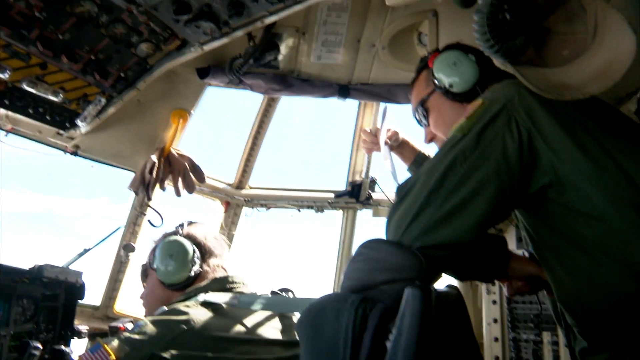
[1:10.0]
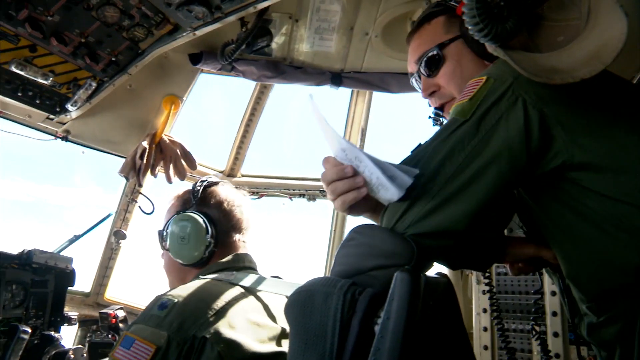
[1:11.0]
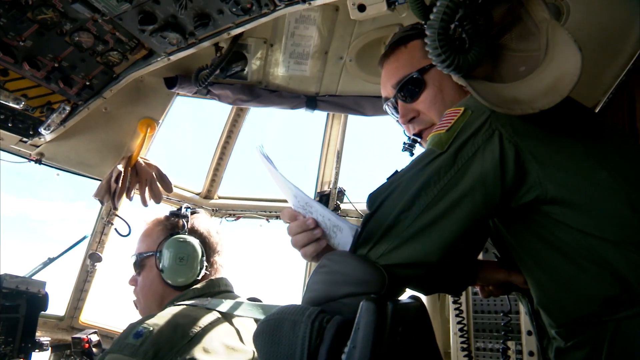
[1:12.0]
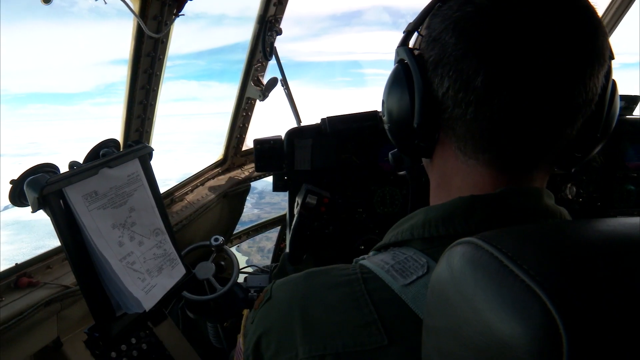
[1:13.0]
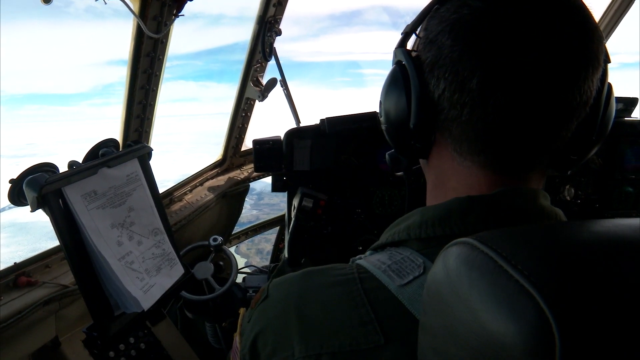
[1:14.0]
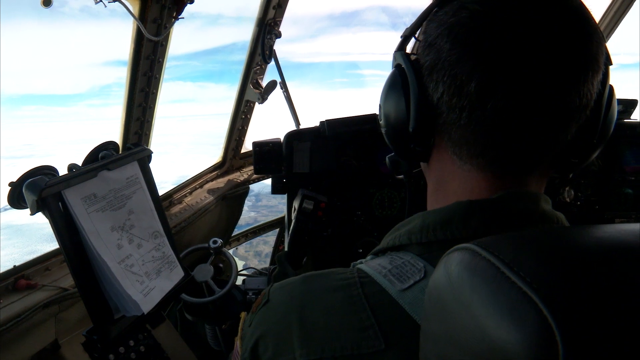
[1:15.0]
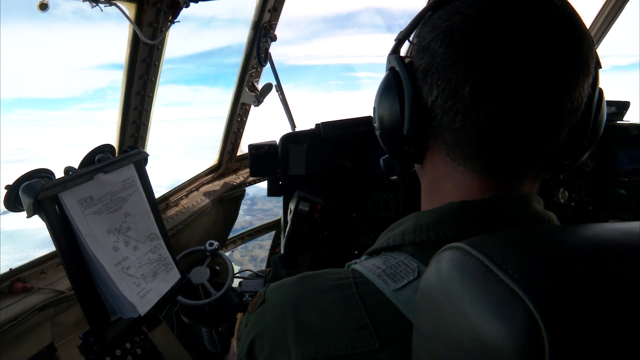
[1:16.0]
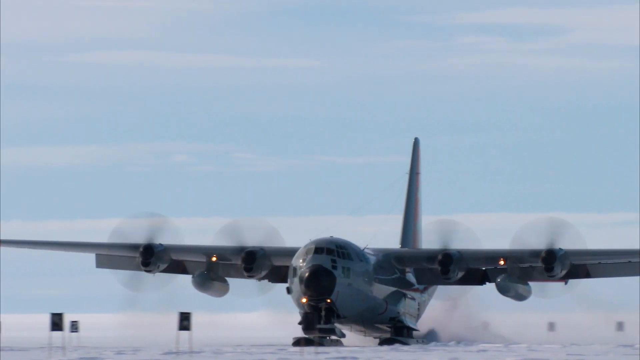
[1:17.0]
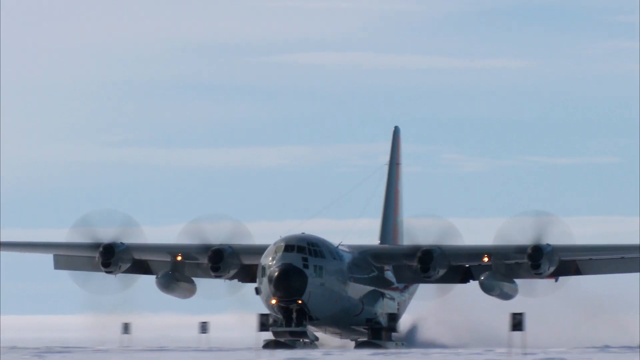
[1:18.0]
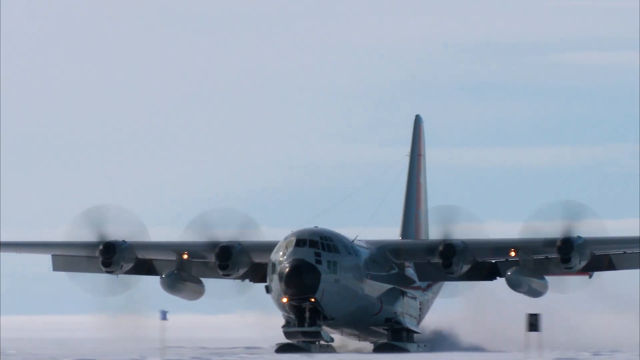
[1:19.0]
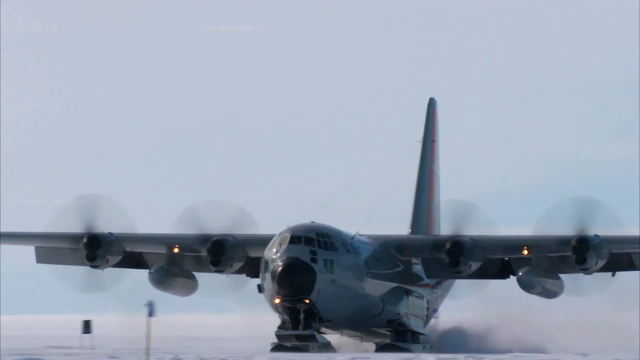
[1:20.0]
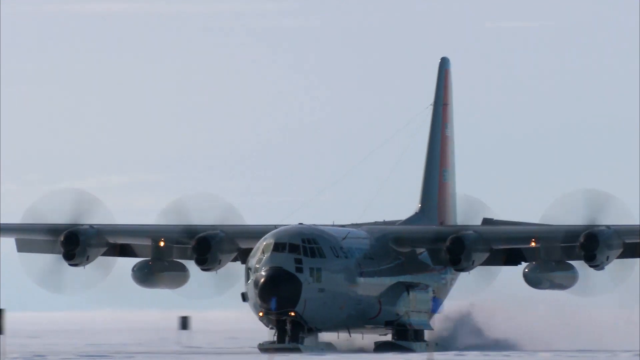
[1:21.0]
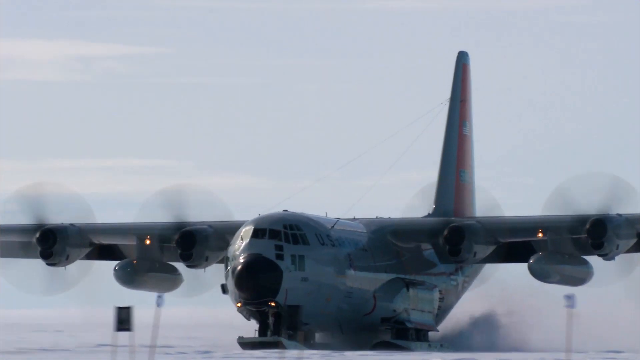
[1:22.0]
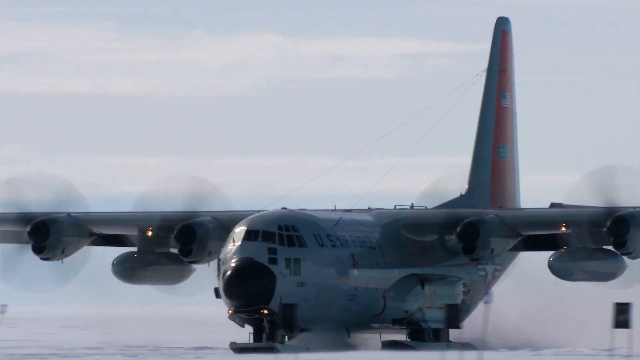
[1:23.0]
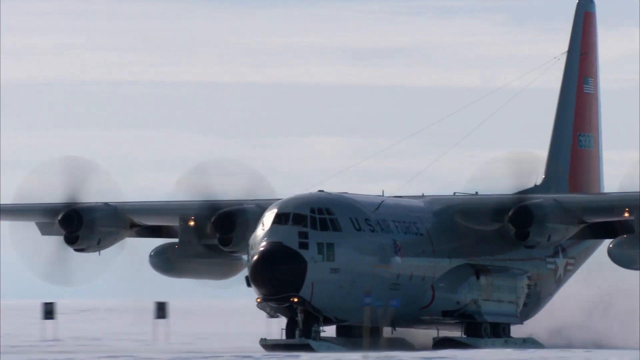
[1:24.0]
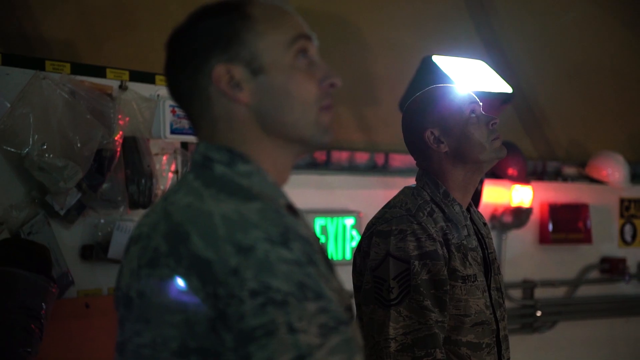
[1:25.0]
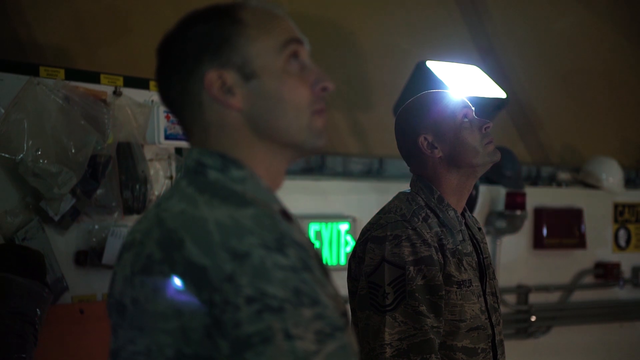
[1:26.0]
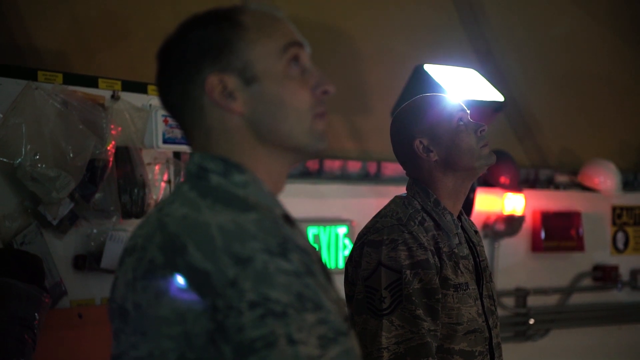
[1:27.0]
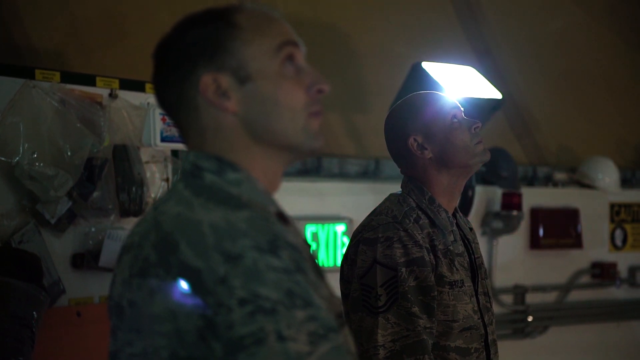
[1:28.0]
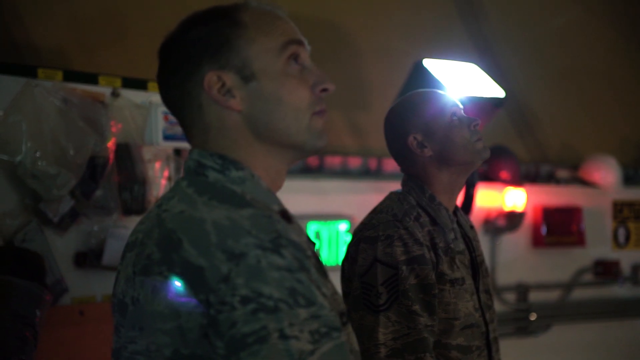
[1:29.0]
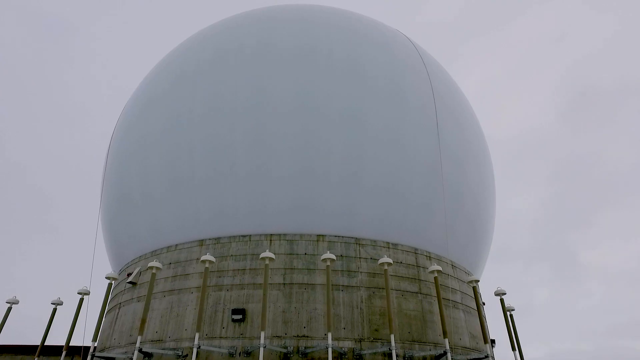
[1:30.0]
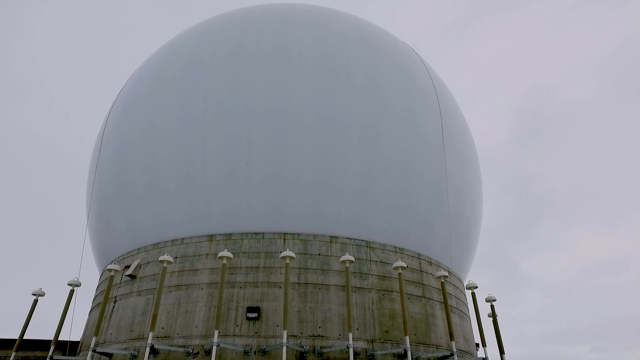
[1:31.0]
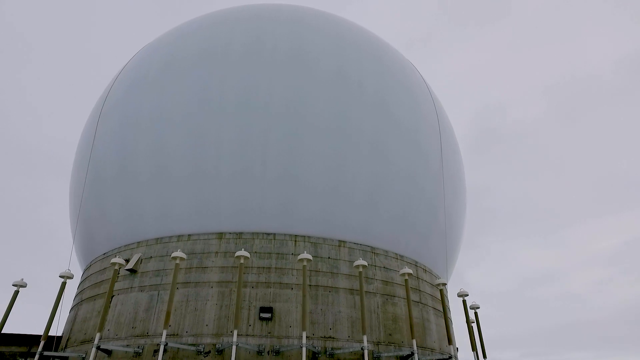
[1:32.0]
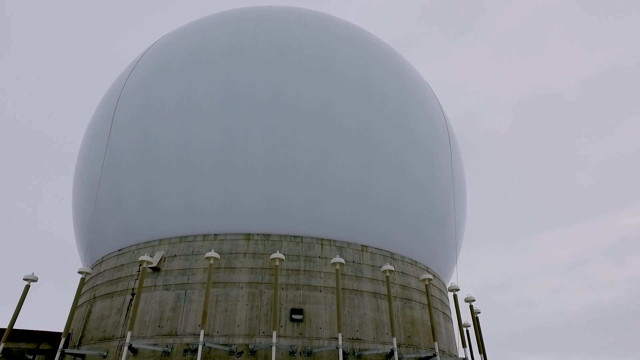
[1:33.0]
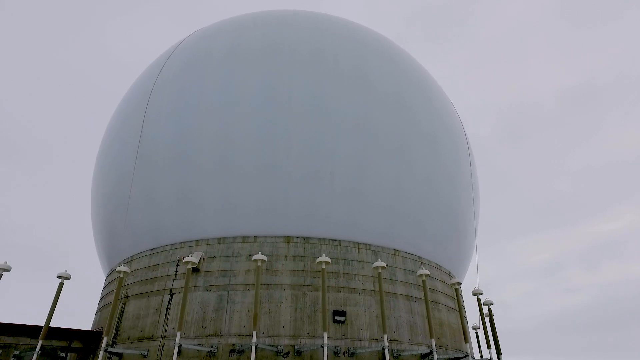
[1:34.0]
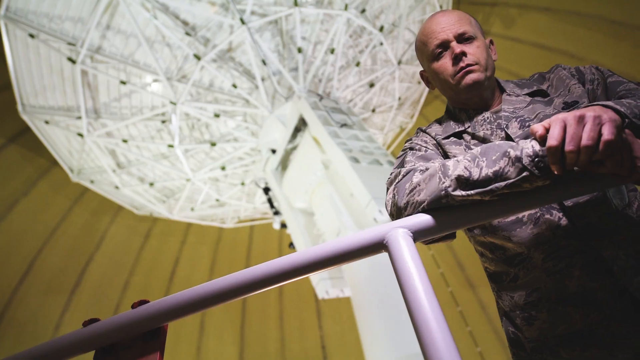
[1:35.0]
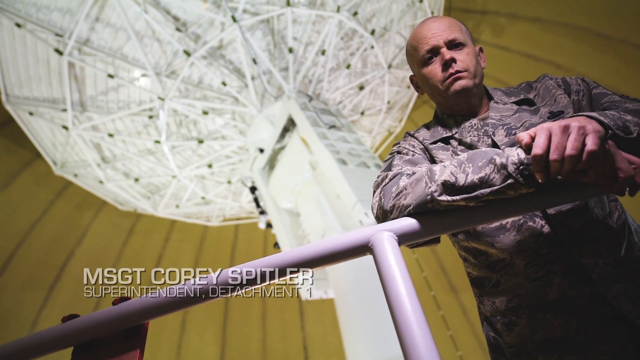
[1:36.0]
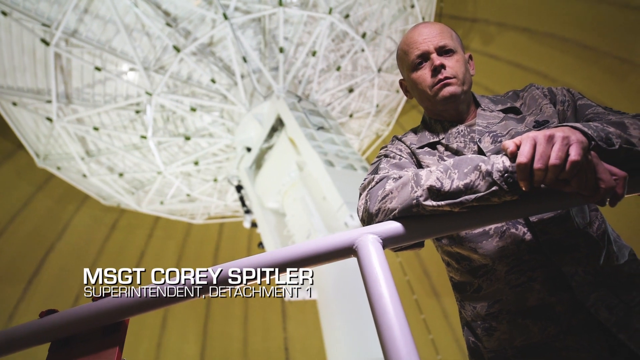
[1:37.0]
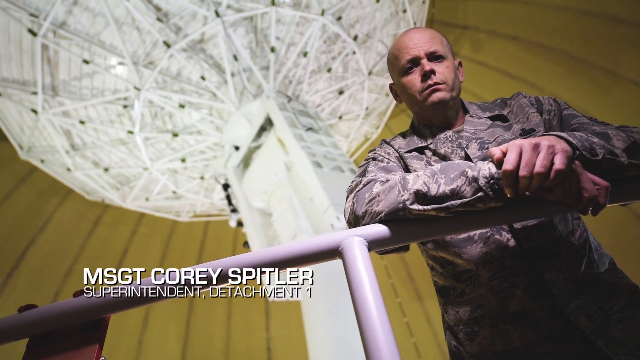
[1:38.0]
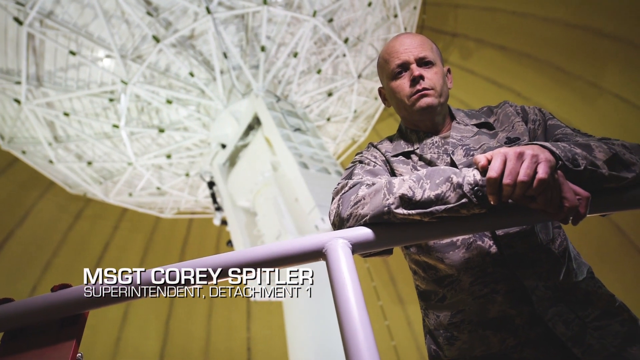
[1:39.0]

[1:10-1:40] Inside the military aircraft, Air Force members wear green safety headphones. The front of the cockpit has multiple windows, and buttons and switches cover the ceiling. A pilot flies next to a piece of paper clipped onto a board, and a man sitting in the back holds a piece of paper and seems to be reading from it. The military plane is then seen landing; judging by its look it seems to be a Boeing, apparently a large military transport aircraft or something used for surveillance or aerial surveying. Four propellers are on the front of the plane, along with two engines on either side. The outside of the orb-shaped building is shown; its base is made of rock, and it seems to house one of the large satellites seen earlier.